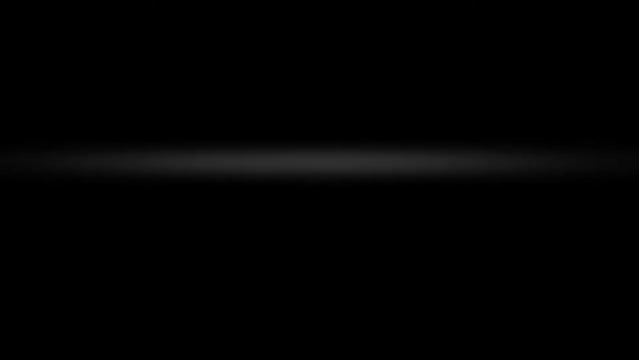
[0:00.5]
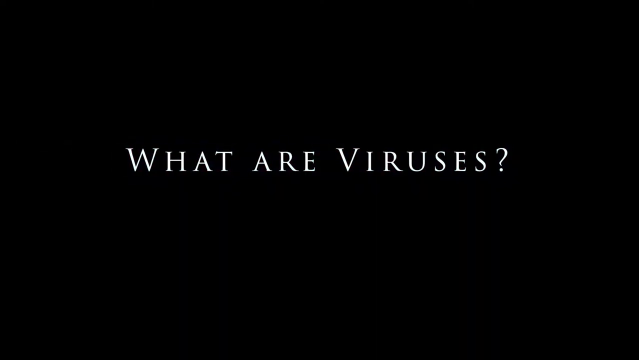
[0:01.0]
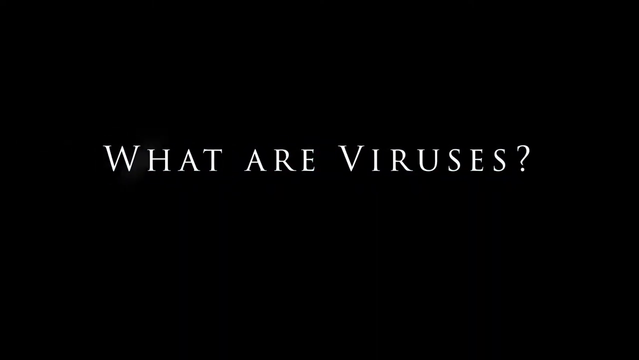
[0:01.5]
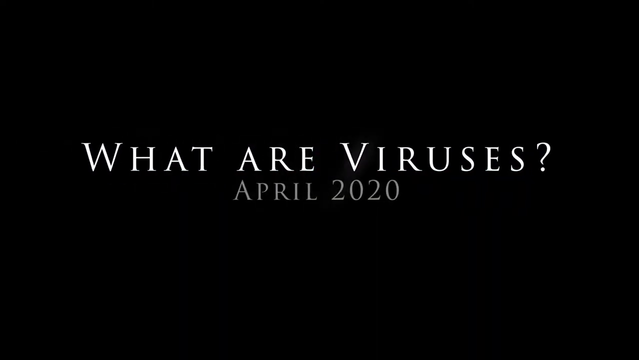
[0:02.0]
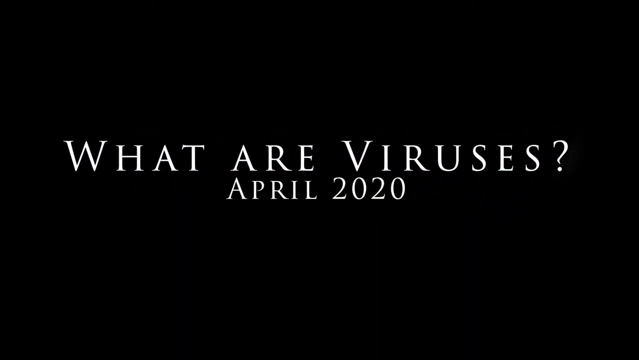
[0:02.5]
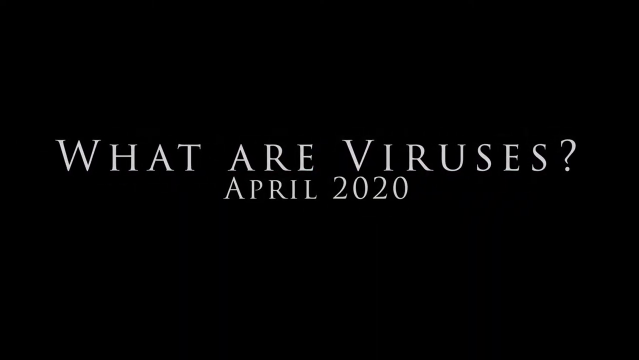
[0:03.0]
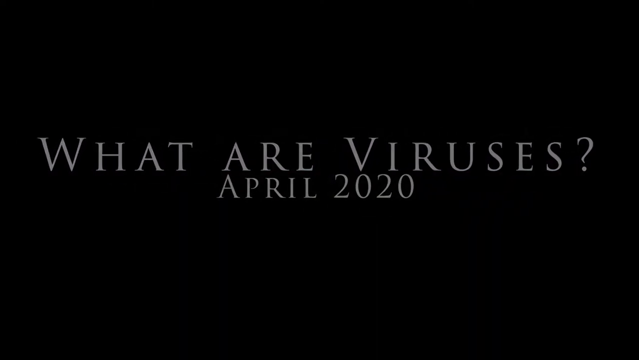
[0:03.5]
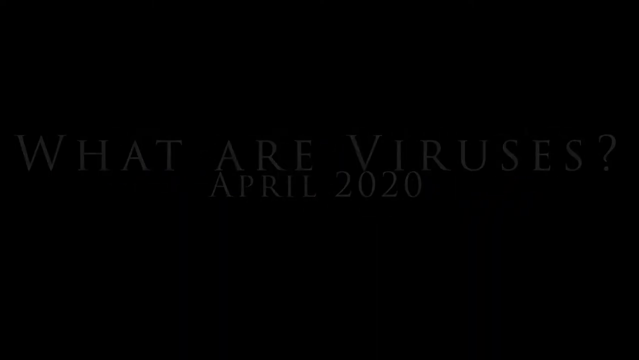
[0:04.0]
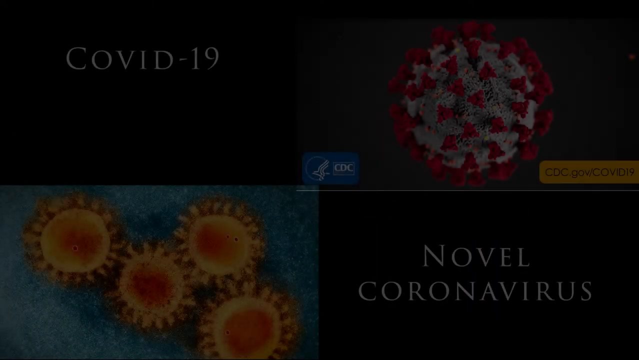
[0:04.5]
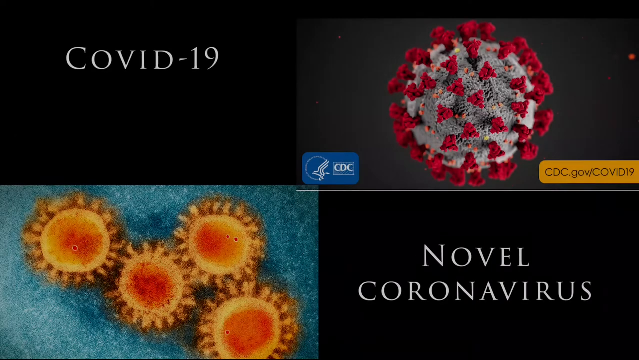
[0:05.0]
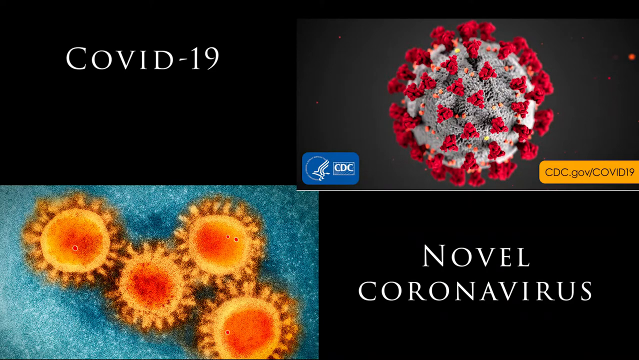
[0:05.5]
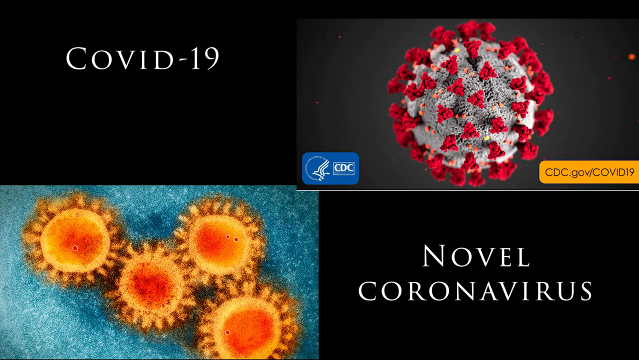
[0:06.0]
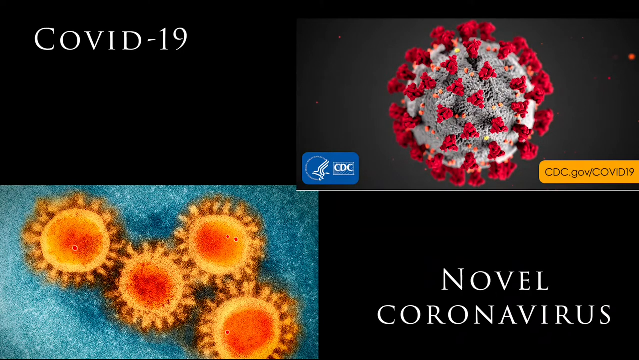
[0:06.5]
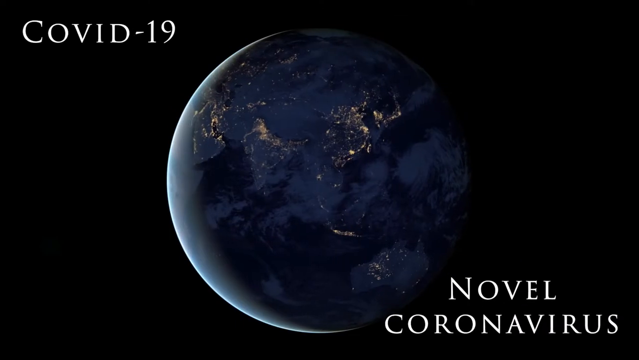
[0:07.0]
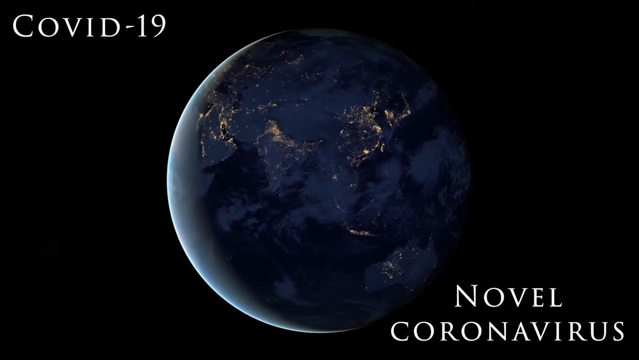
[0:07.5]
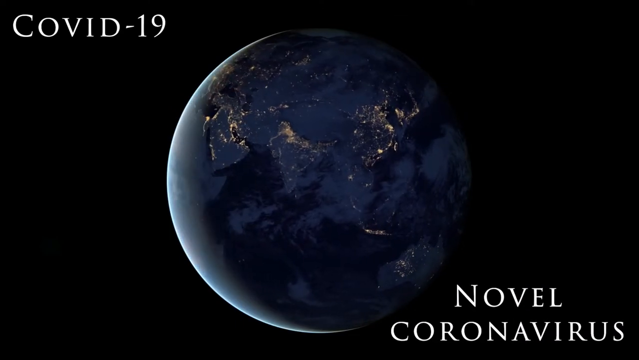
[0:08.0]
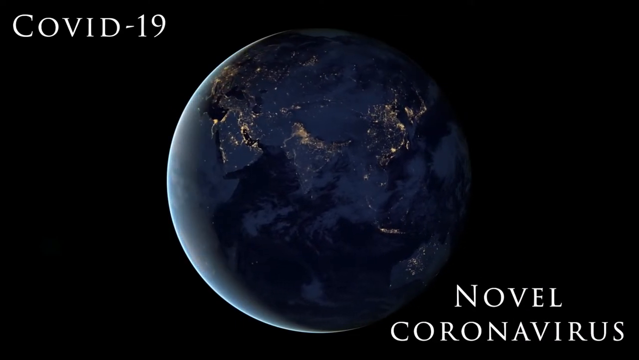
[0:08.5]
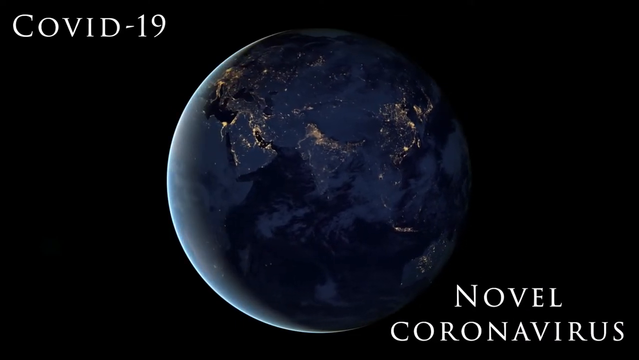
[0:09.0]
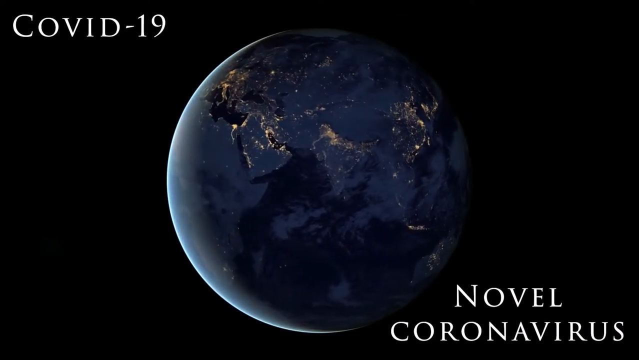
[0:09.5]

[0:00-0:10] The video opens with a screen that says "What are viruses, April 2020." It then transitions to a split screen with four sections, with a virus in the upper right corner and a virus in the lower left corner. The upper right virus is the COVID-19 virus, depicted as a gray ball with red spikes coming out all around it. The lower left image appears to be a more realistic look at the novel coronavirus. The text "novel coronavirus" is in the lower right of the screen and "COVID-19" is in the upper left. Next, an image of the globe of Earth appears, spinning counterclockwise.